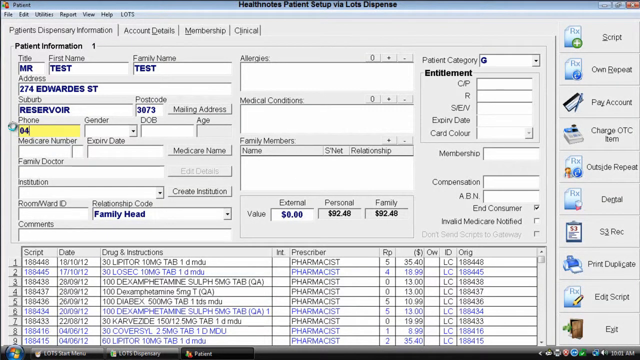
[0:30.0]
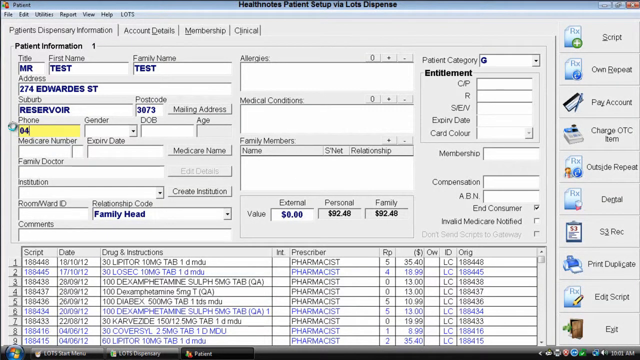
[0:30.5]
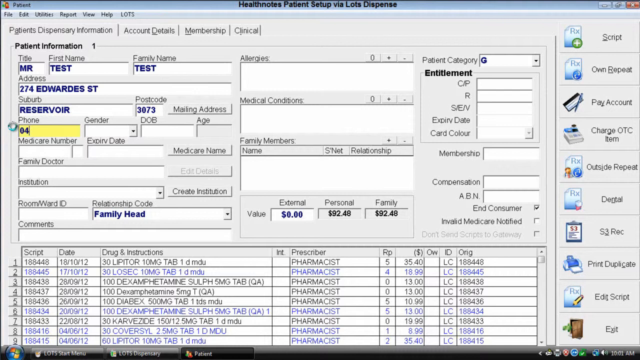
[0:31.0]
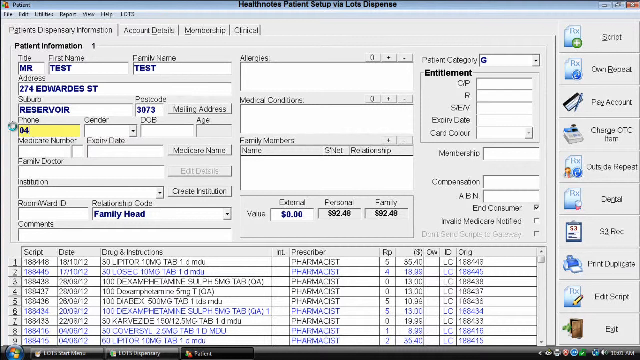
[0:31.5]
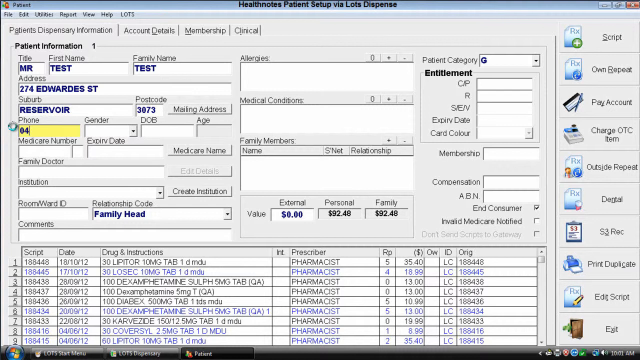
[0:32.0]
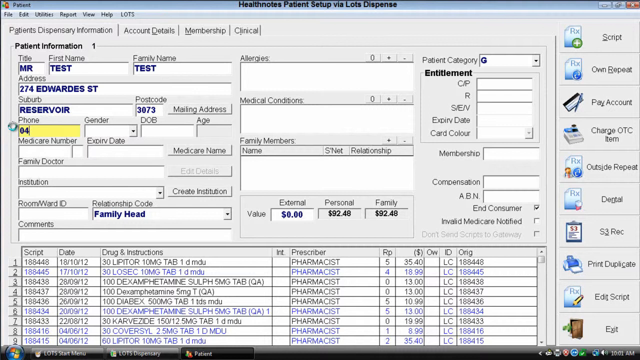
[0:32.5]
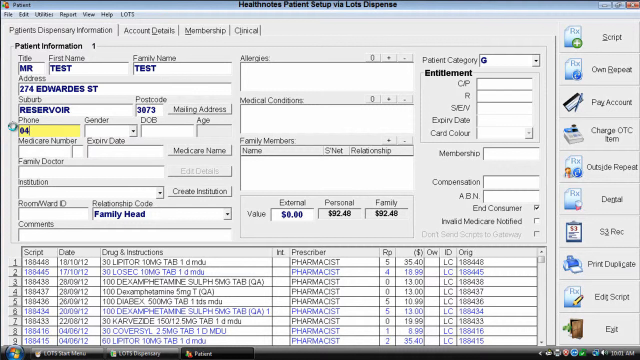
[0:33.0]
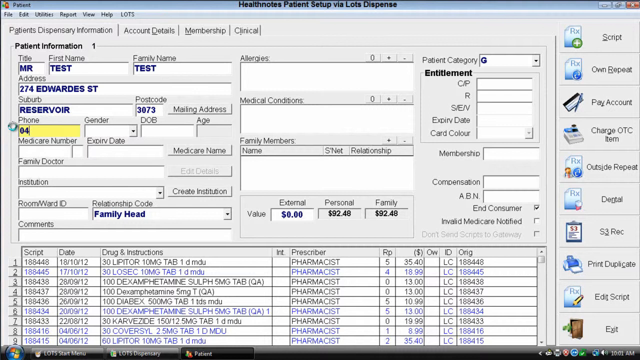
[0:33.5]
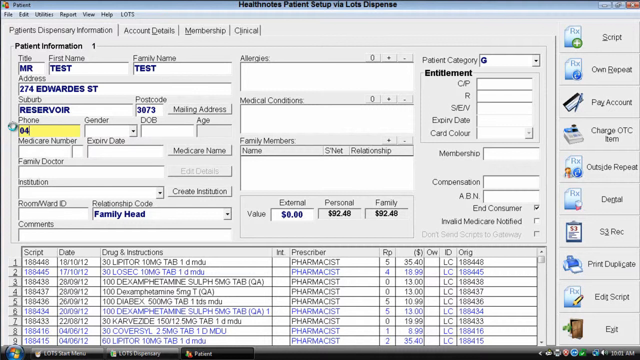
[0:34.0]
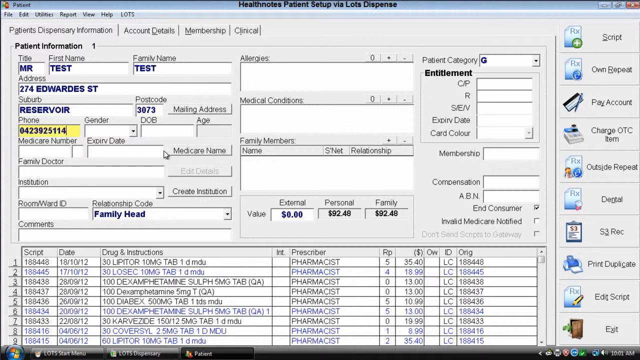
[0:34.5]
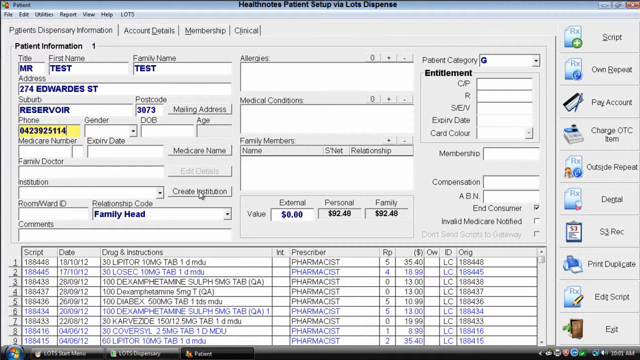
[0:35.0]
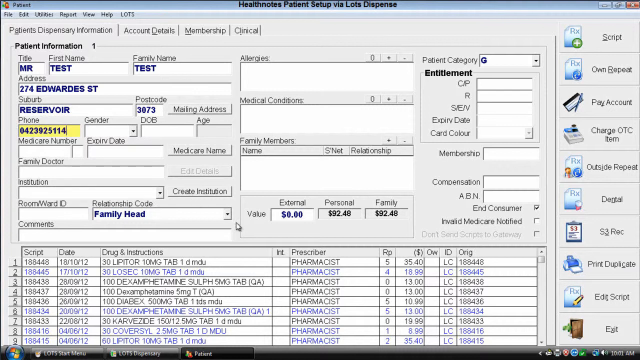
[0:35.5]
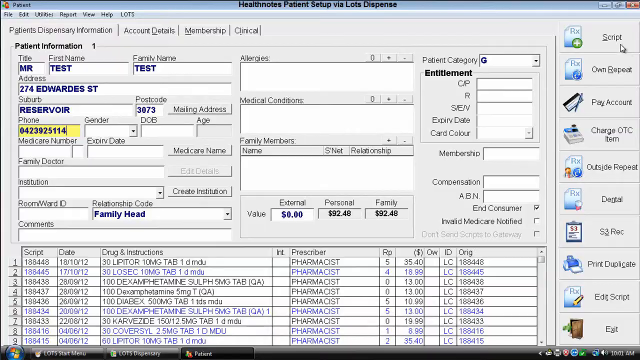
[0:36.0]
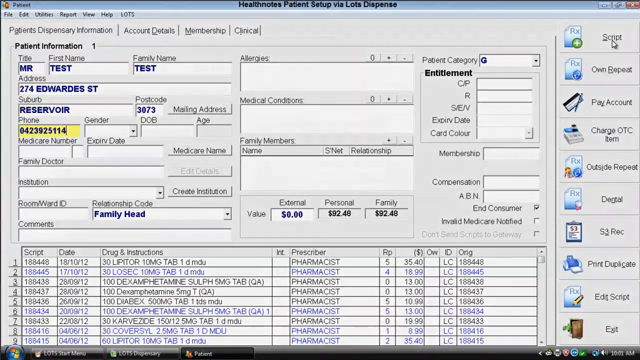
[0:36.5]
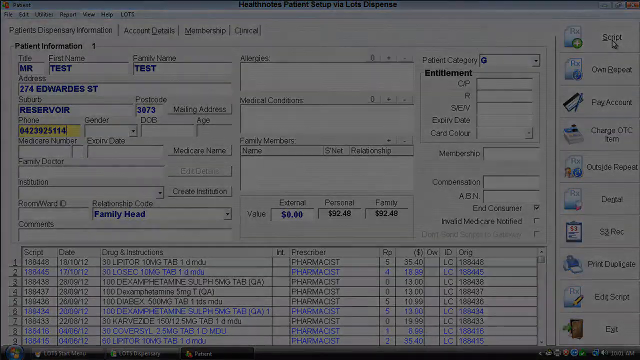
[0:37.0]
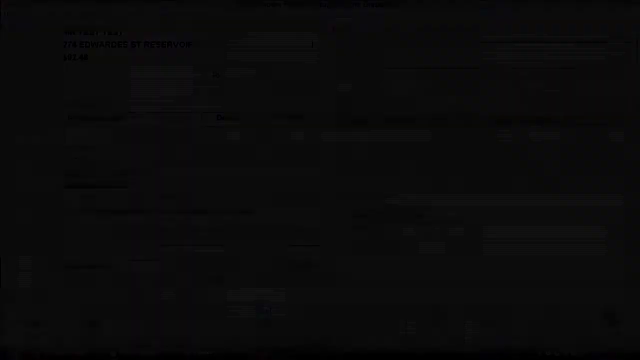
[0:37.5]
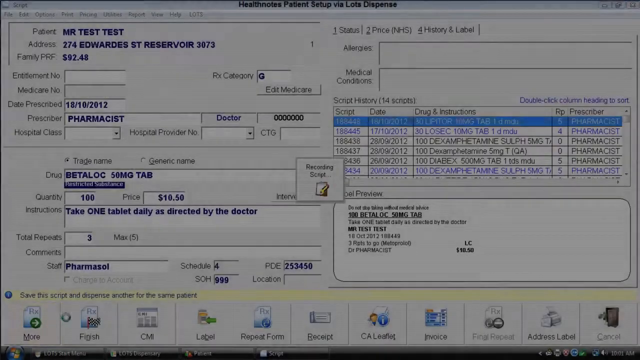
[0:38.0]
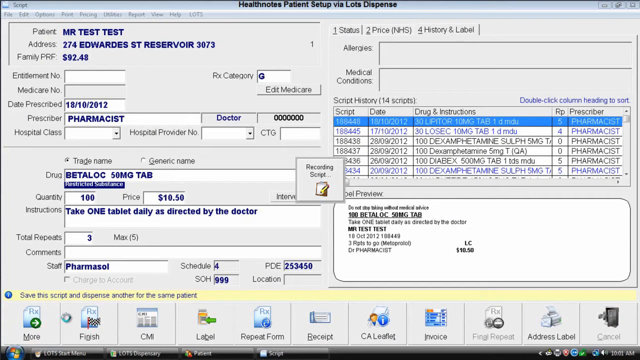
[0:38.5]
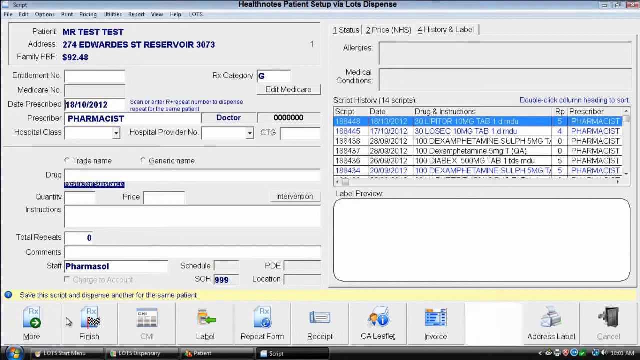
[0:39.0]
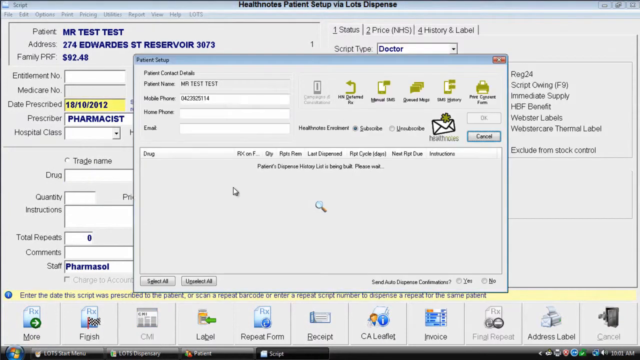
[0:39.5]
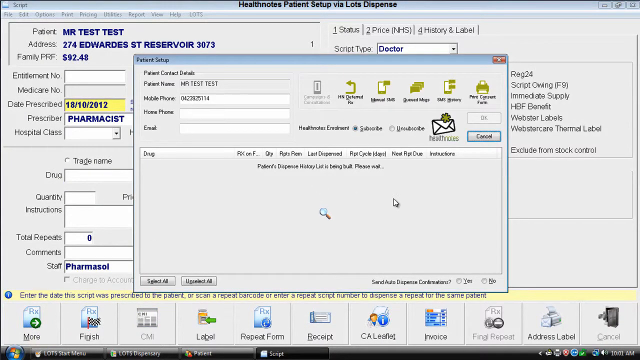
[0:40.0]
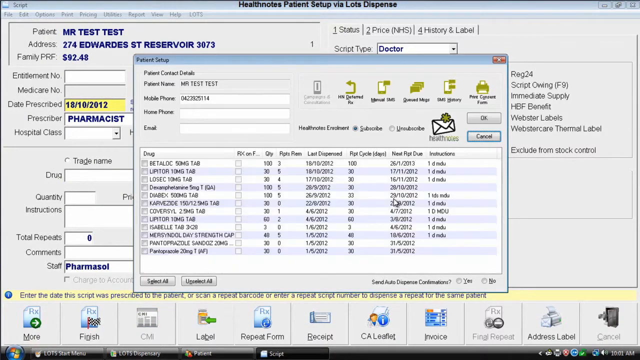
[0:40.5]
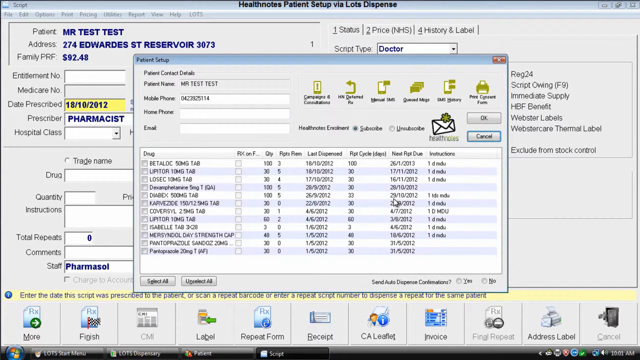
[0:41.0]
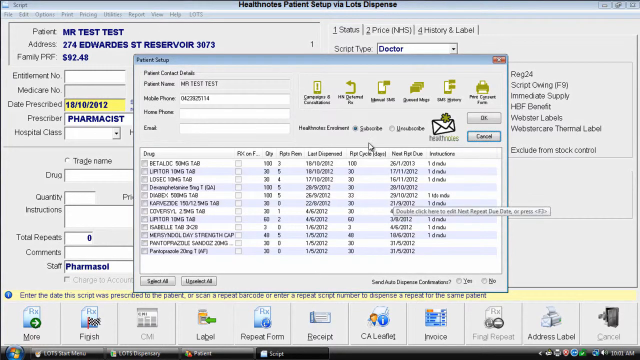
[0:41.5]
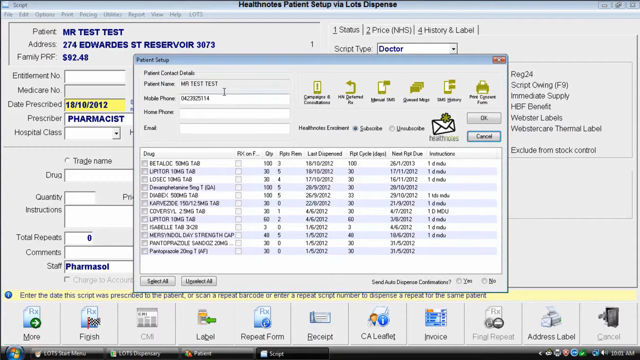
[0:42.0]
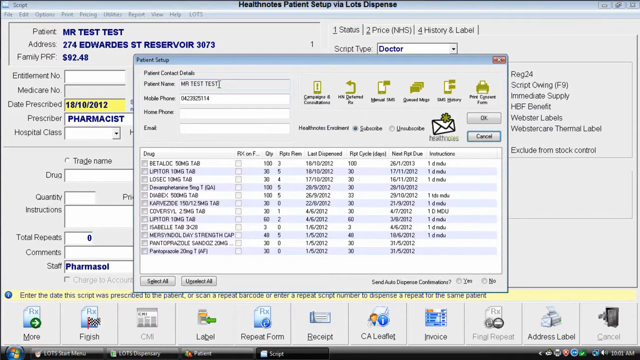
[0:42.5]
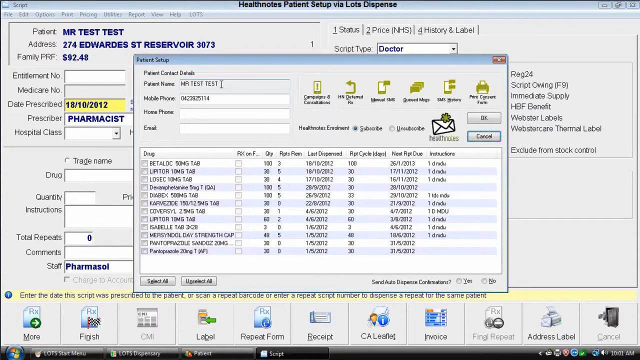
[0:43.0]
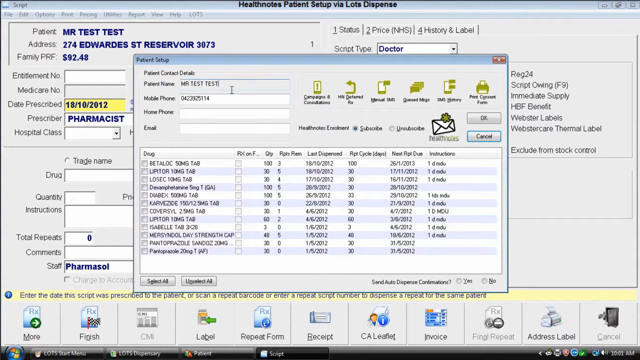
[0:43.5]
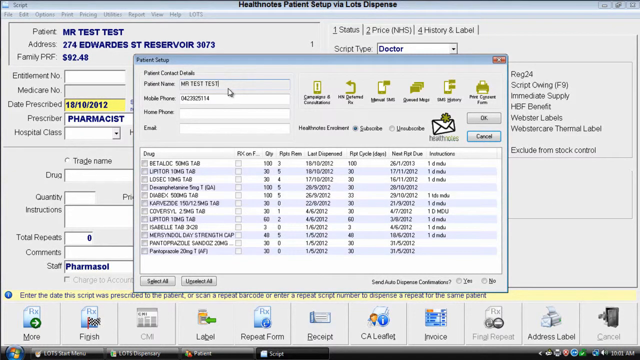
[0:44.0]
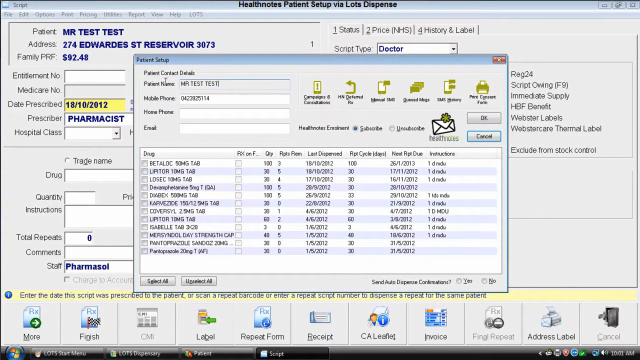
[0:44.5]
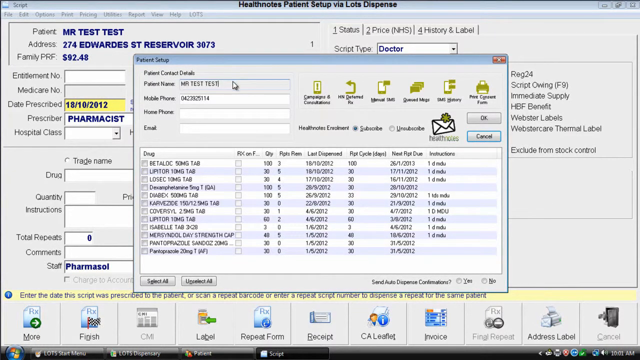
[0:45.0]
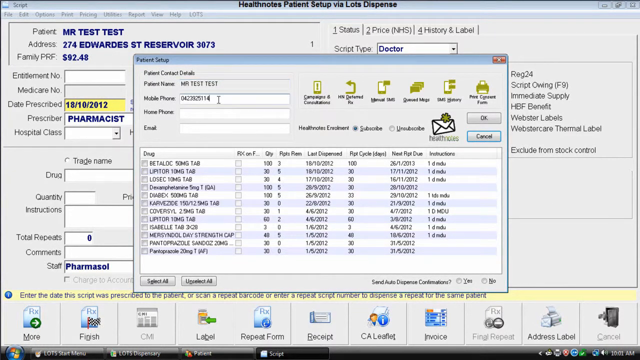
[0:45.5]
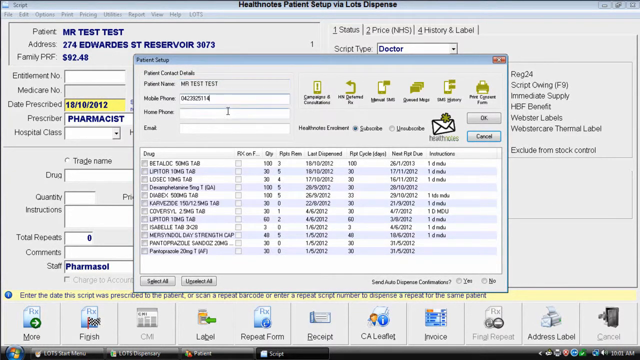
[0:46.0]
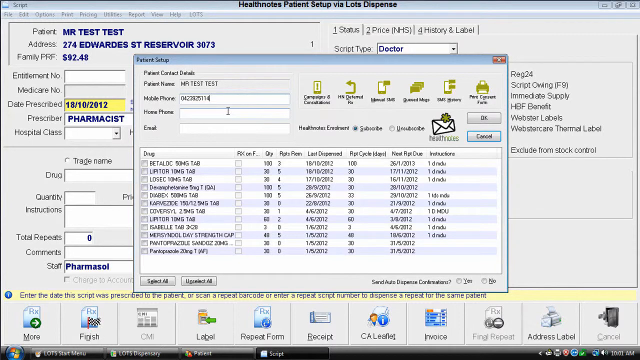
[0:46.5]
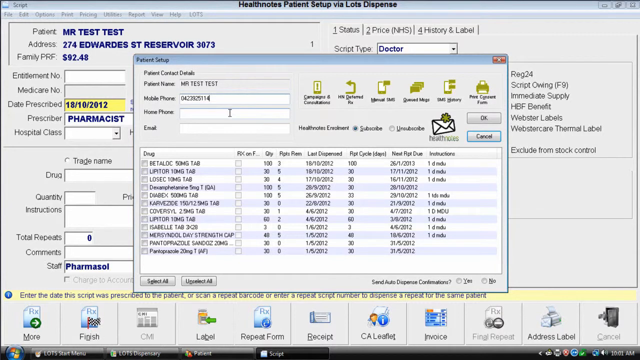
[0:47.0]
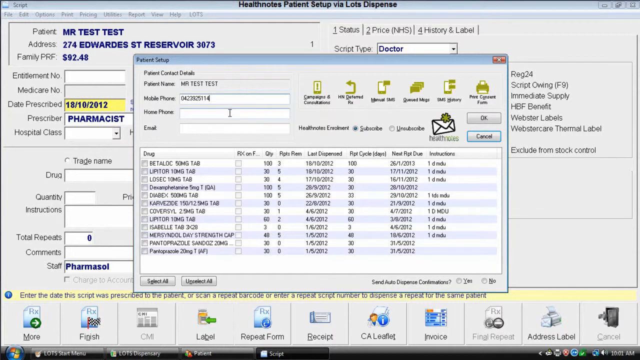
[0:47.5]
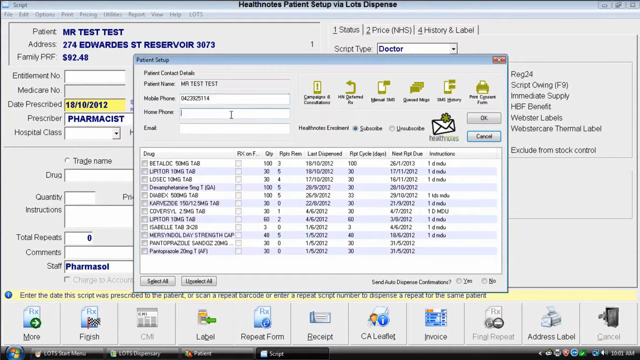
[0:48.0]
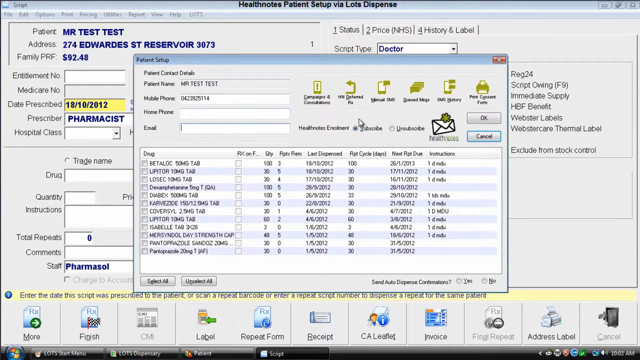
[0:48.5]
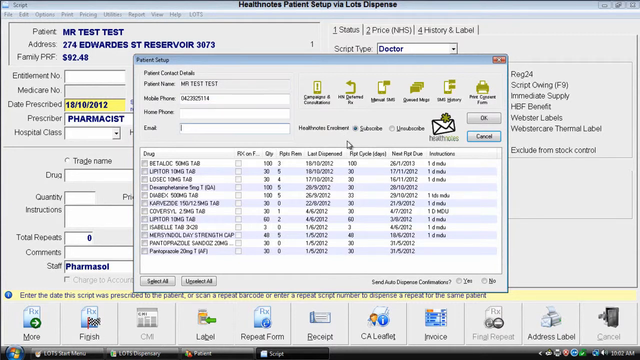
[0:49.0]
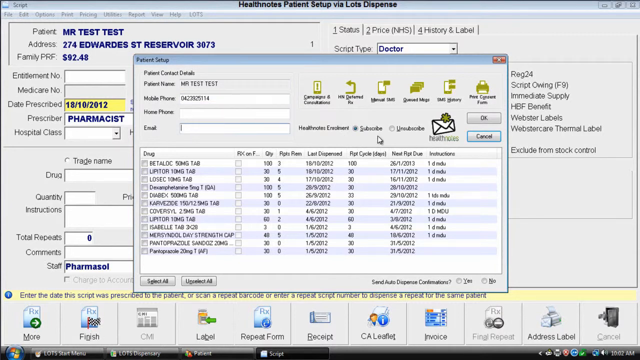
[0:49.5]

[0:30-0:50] Another screen appears that seems to hold all of the patient information. Tabs at the top read "patient's dispensary information," "account details," "membership" and "clinical." The patient's dispensary information tab is open, showing fields for data such as first name, address, last name, phone number, gender, family doctor, Medicare number, room ID, institution, medical conditions, allergies and family members, as well as a list of the patient's medications, the prescriber and how much each cost. The user taps the script tab on the right, which switches to the Scripts page, again with many text input fields for patient and prescription information. A small pop-up in the middle of the screen says "recording script," and then another window pops up that says "patient setup," where a list of medications populates with checkboxes next to them, along with information on when each was last dispensed and what cycle the patient was on. The user seems to go over the text input fields at the top of the window, such as patient name, mobile phone, home phone and email.